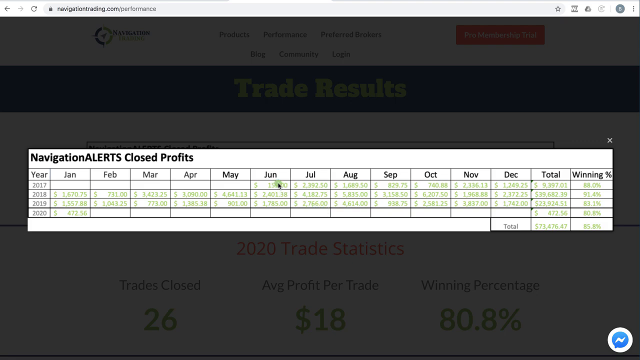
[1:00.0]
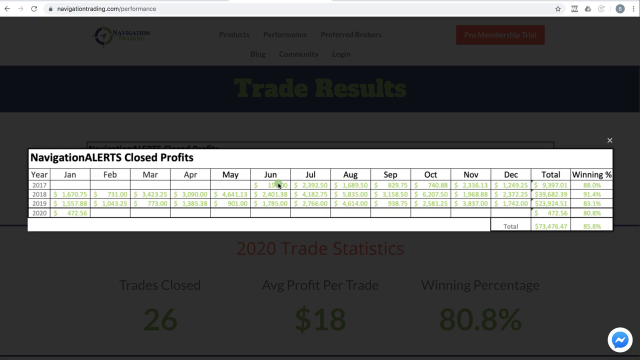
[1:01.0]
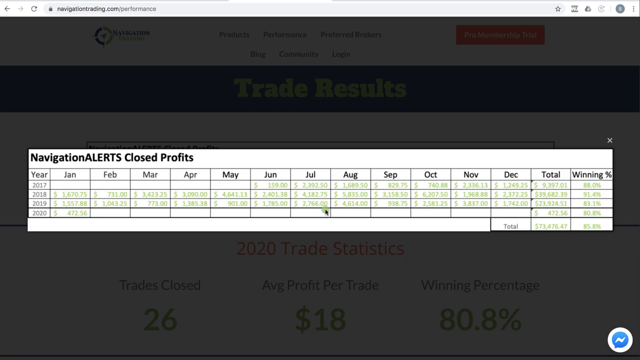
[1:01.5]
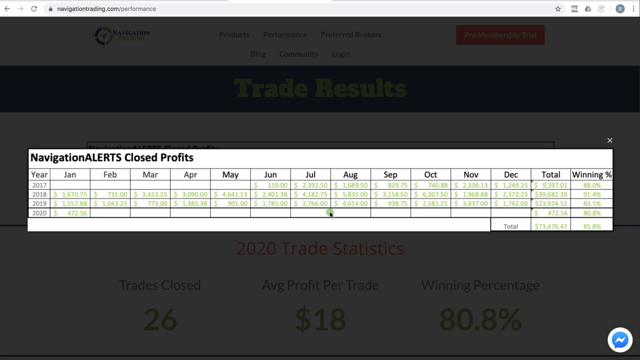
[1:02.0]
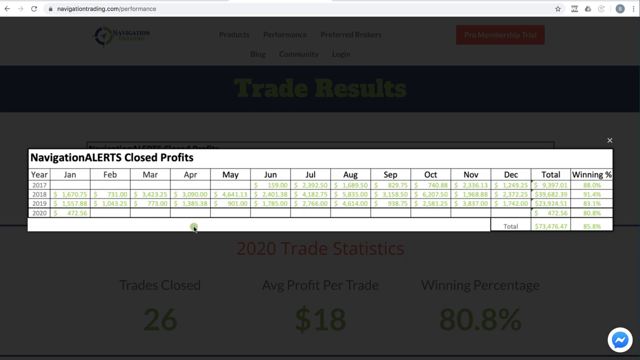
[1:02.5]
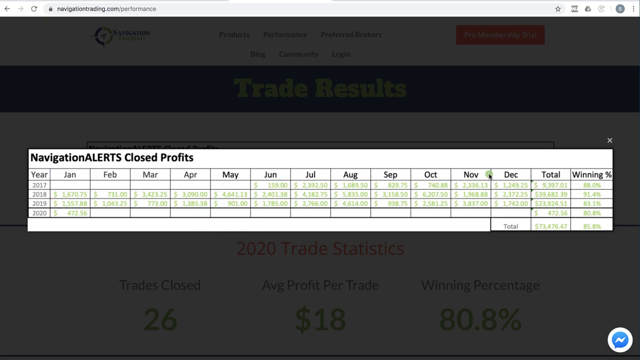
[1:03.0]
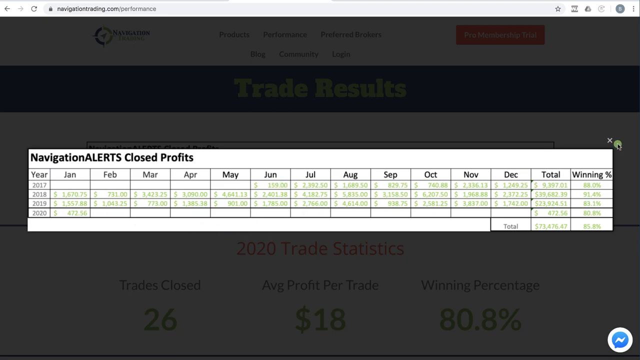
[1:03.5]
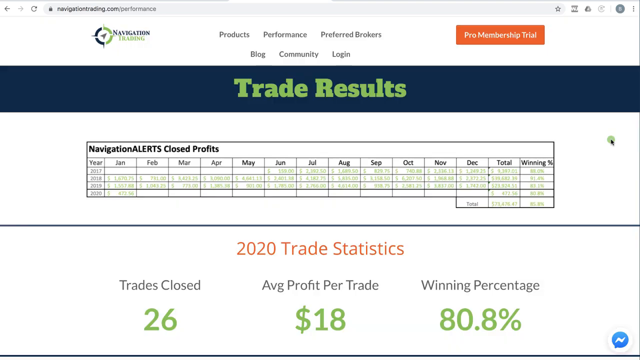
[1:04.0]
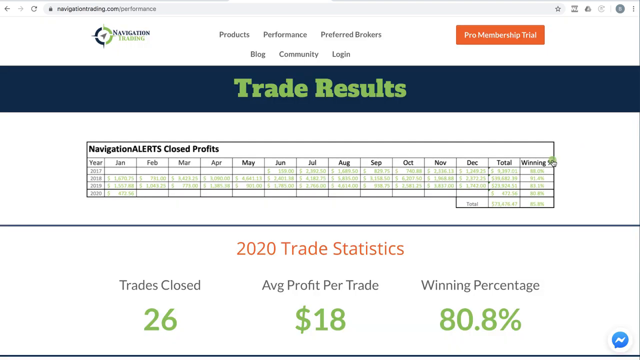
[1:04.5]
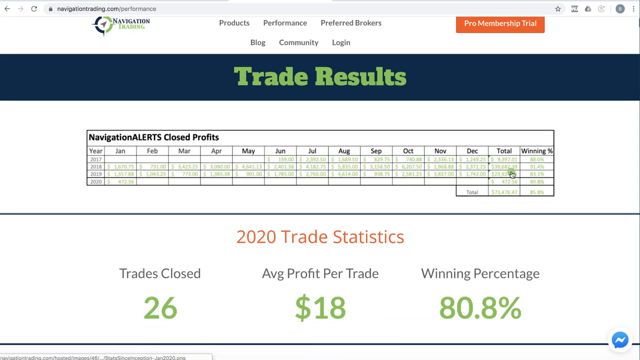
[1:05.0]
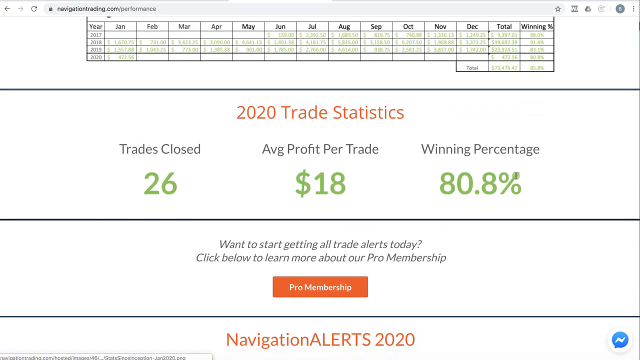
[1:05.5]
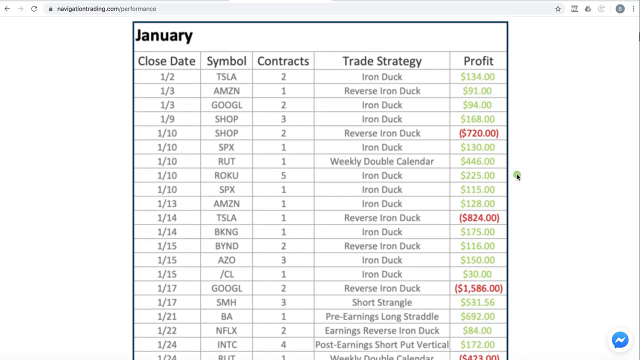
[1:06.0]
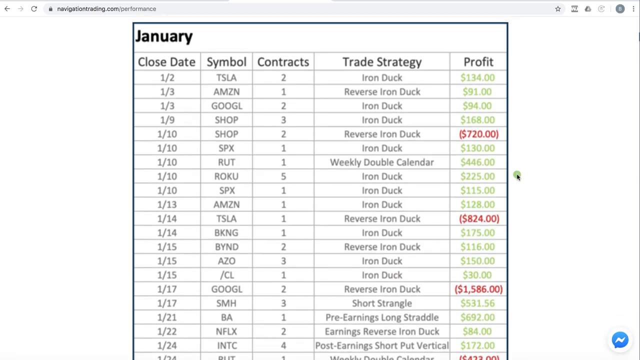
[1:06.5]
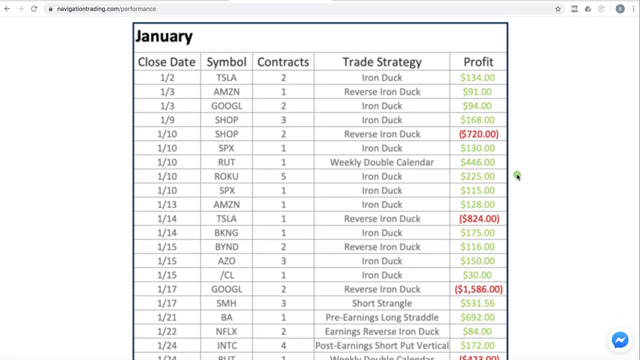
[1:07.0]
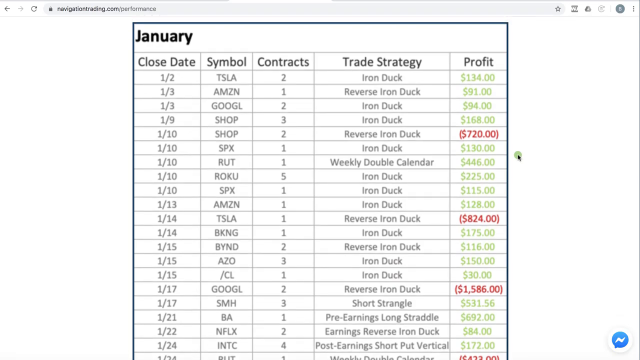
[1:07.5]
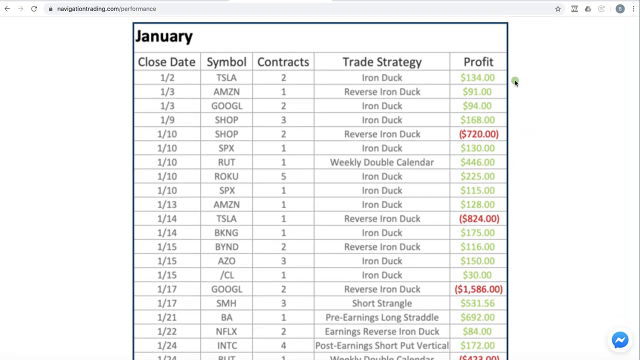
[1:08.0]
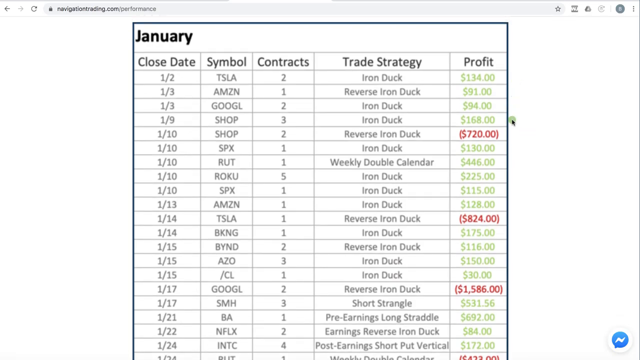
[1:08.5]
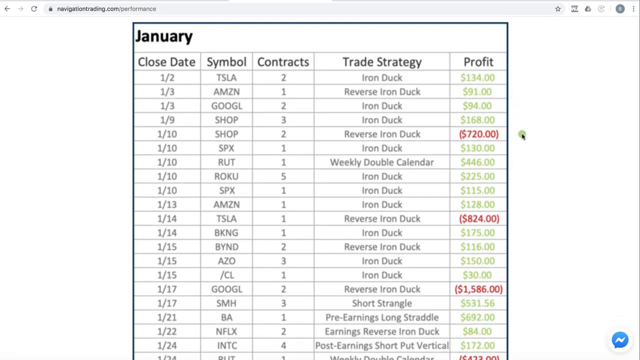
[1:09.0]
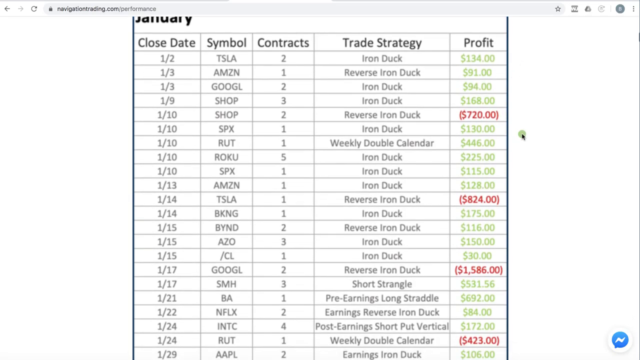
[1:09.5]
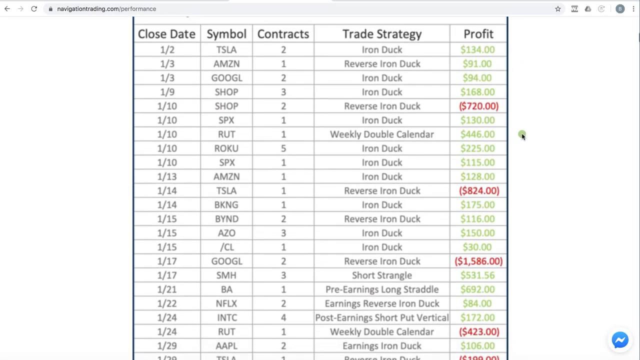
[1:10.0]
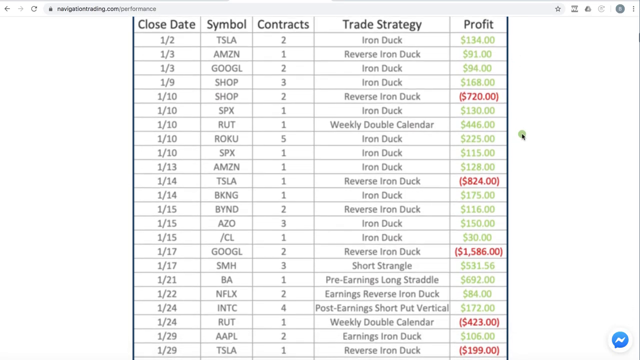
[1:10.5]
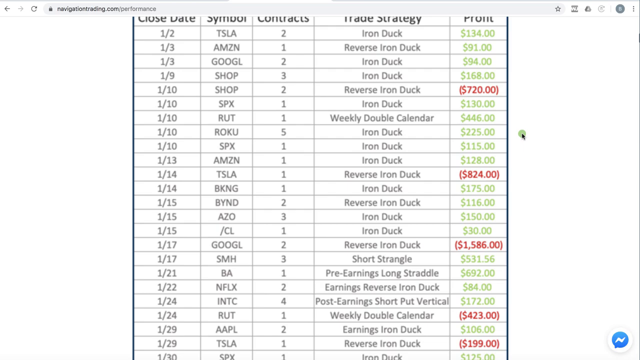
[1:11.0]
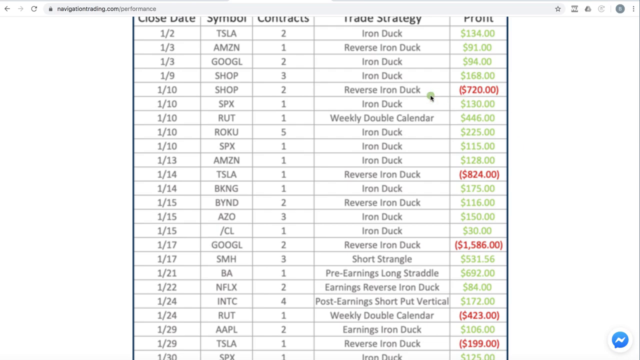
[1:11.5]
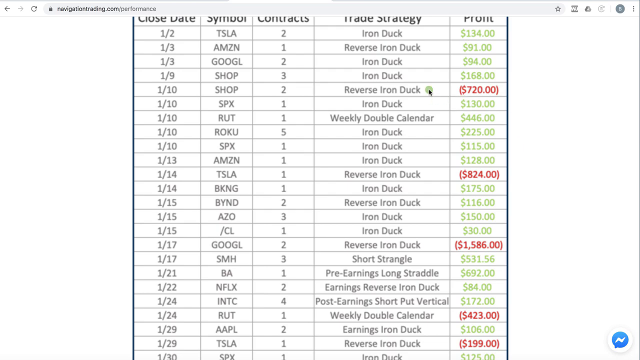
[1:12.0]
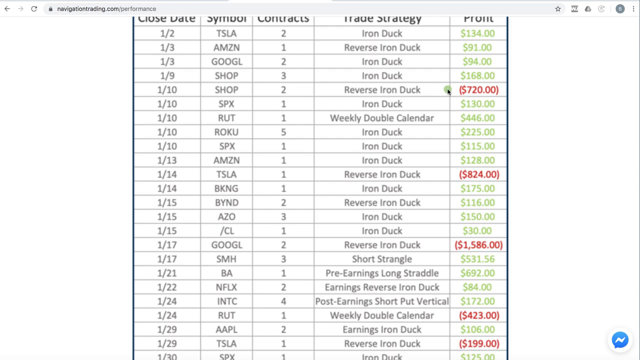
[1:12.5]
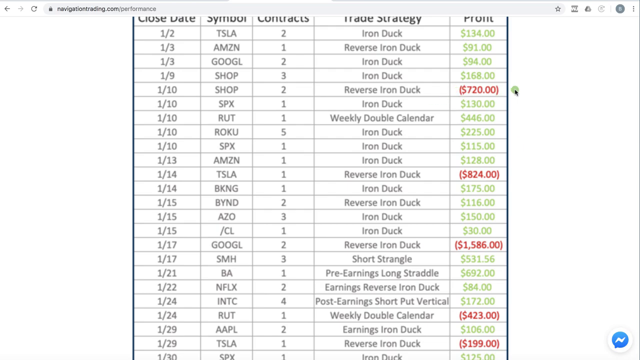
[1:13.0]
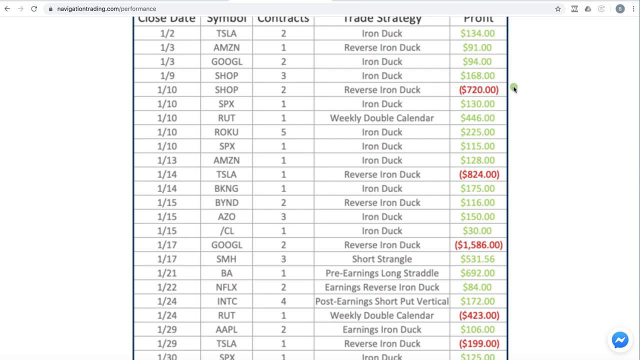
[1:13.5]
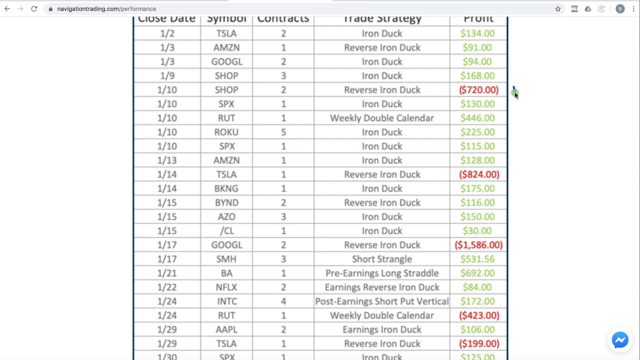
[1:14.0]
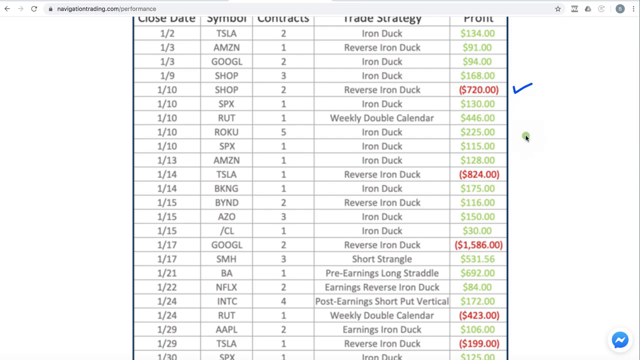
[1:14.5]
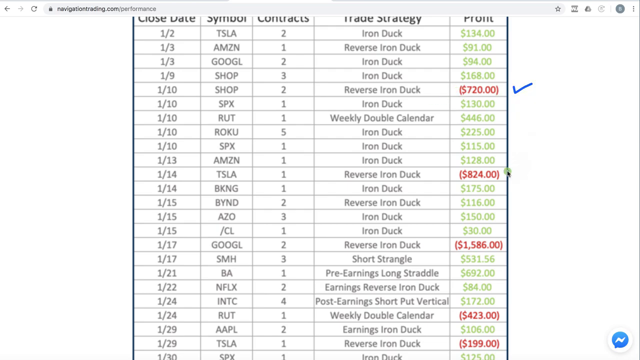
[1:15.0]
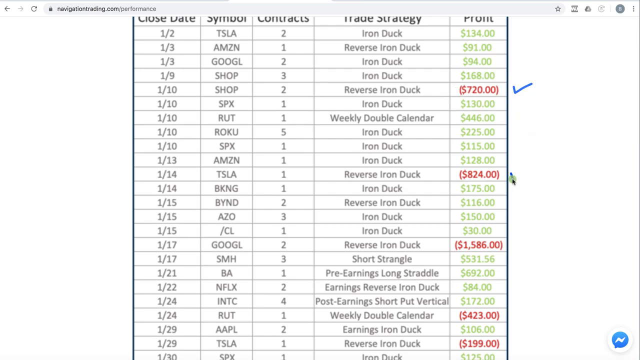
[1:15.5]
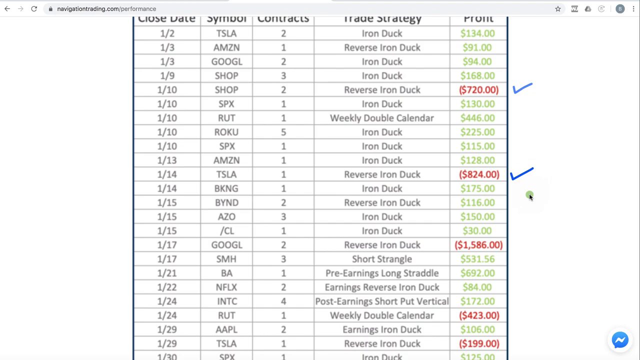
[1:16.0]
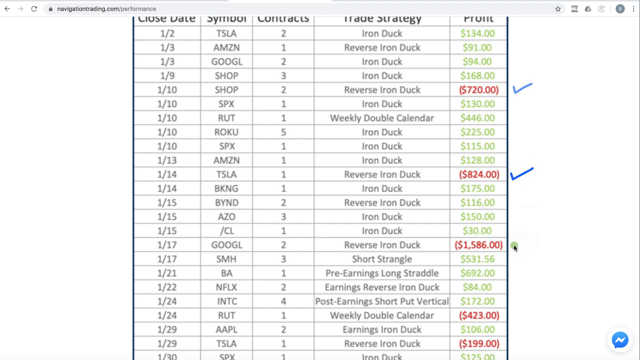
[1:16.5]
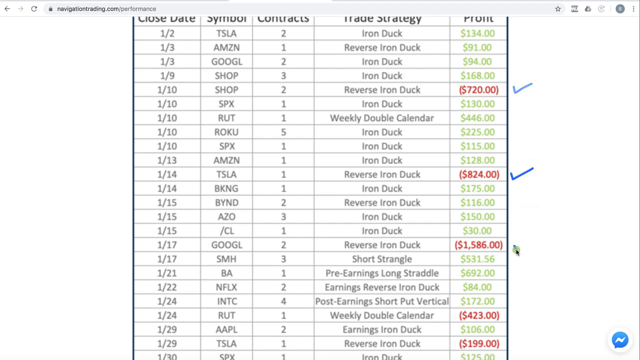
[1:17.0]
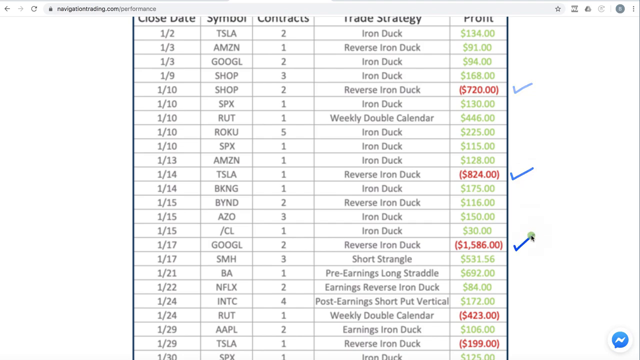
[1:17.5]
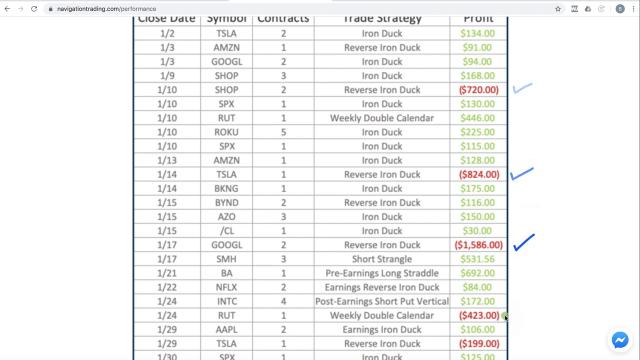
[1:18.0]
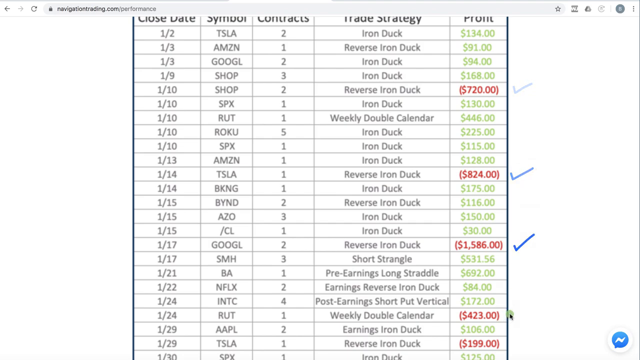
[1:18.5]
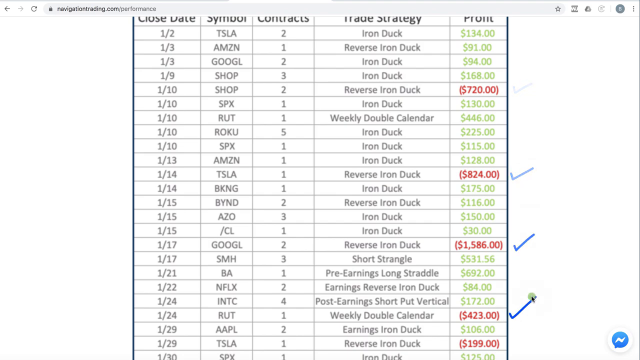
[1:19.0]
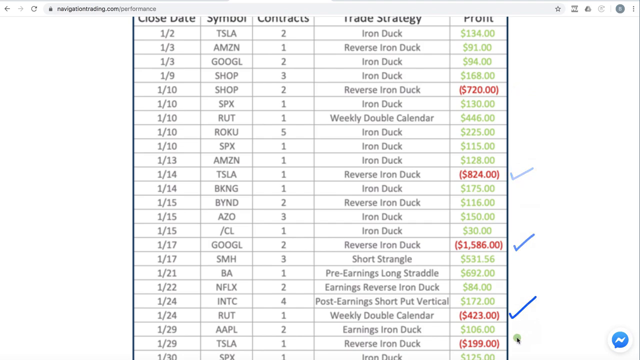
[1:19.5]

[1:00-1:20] The screen lists strategies such as iron duck, double calendar, short strangle, reverse iron dog and iron dog. Under navigation, alerts and closed profits, months are organized with green profits in columns and rows, and different months are being chosen.